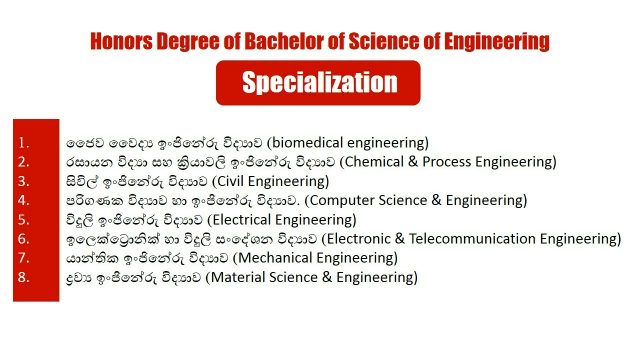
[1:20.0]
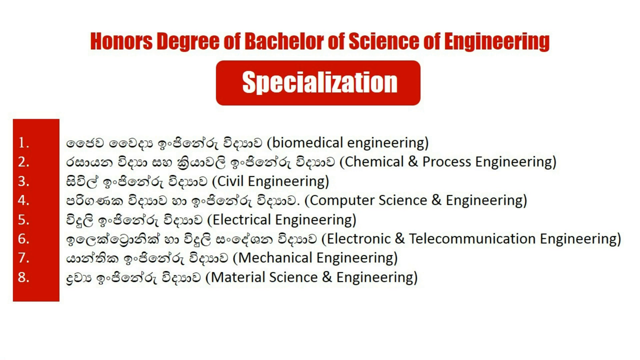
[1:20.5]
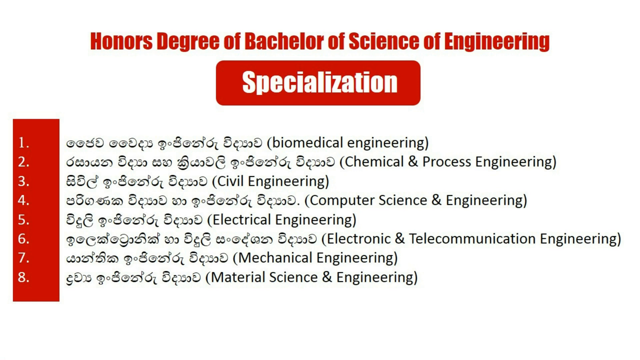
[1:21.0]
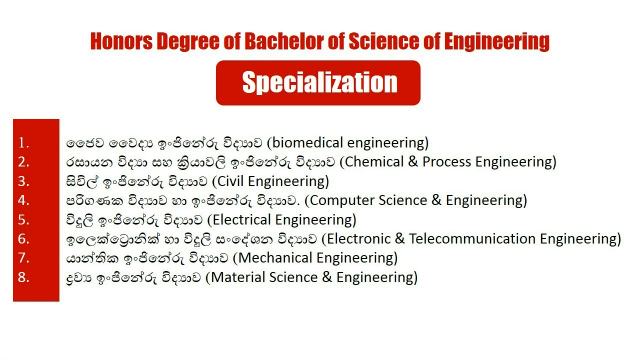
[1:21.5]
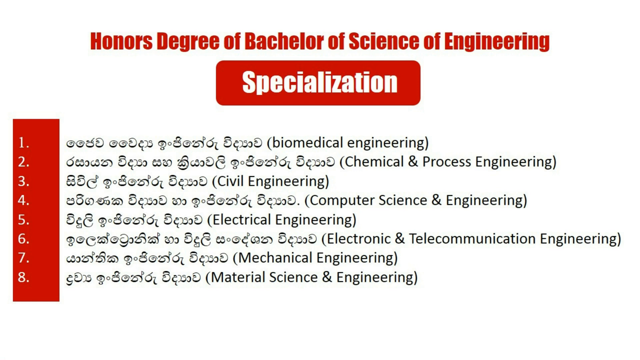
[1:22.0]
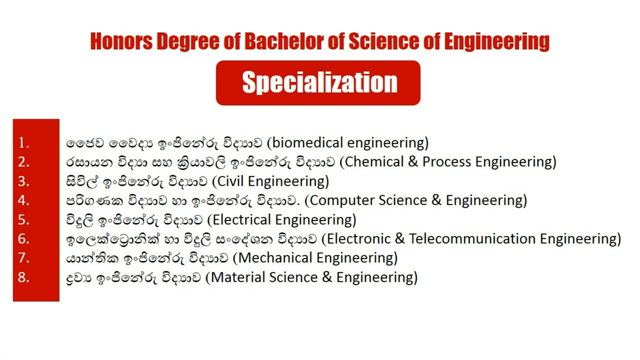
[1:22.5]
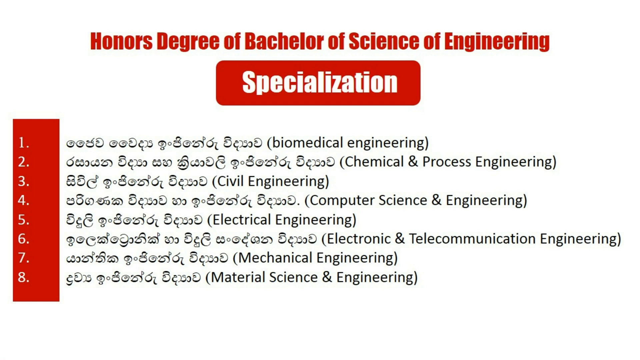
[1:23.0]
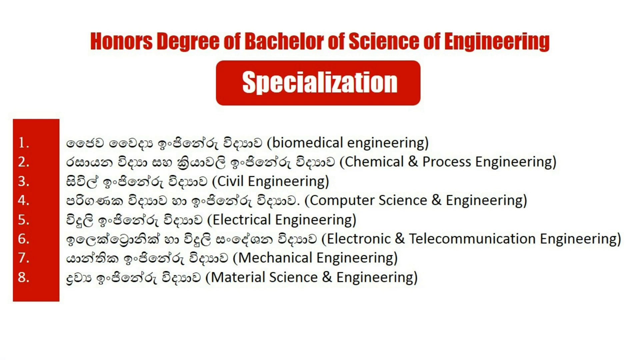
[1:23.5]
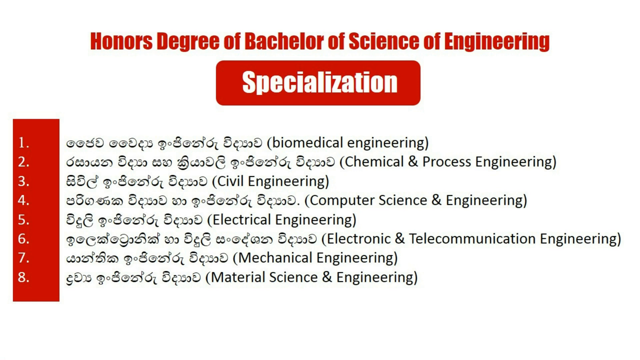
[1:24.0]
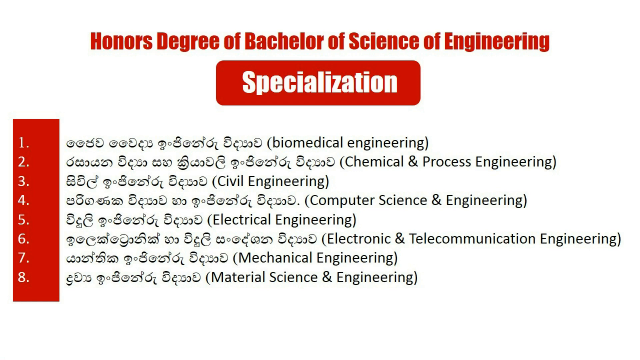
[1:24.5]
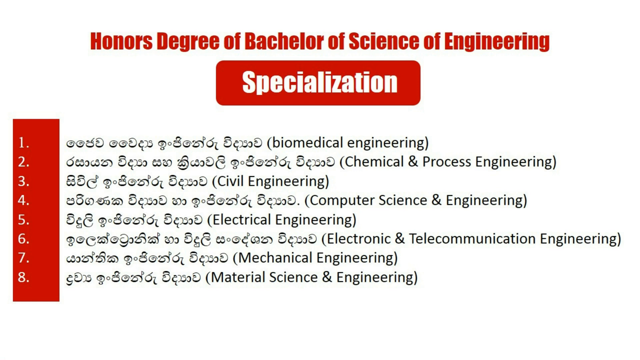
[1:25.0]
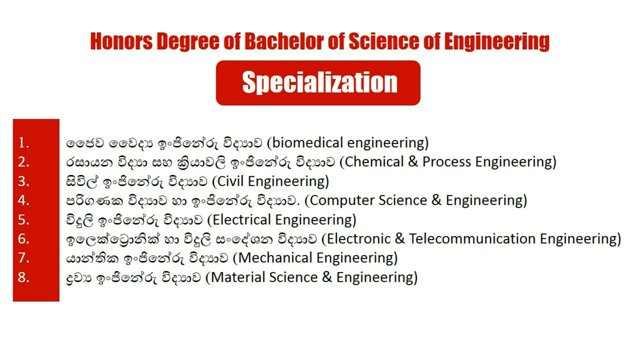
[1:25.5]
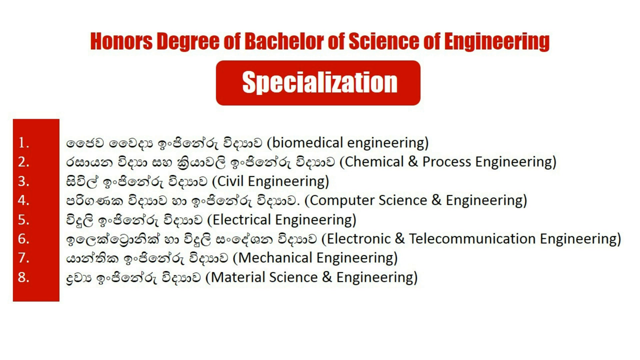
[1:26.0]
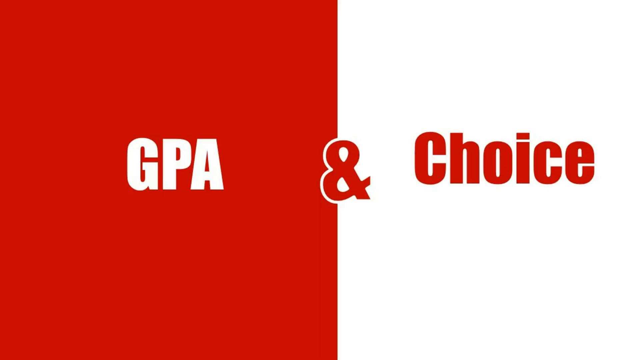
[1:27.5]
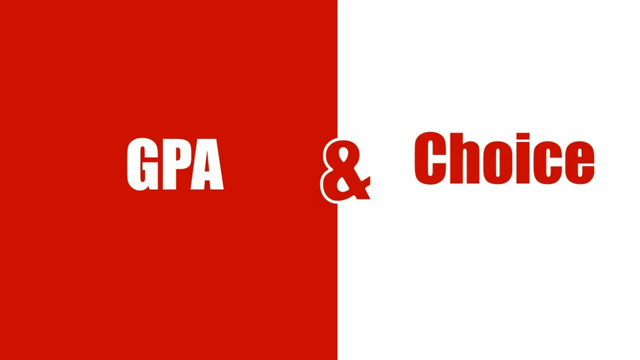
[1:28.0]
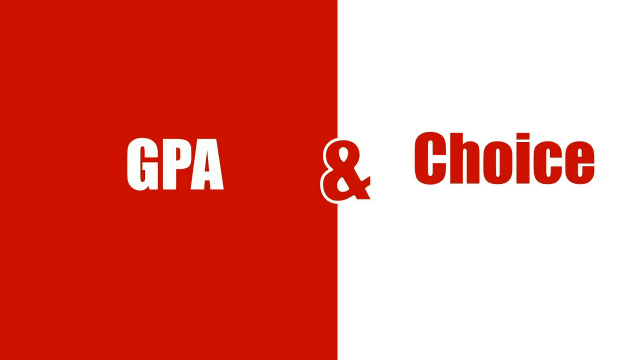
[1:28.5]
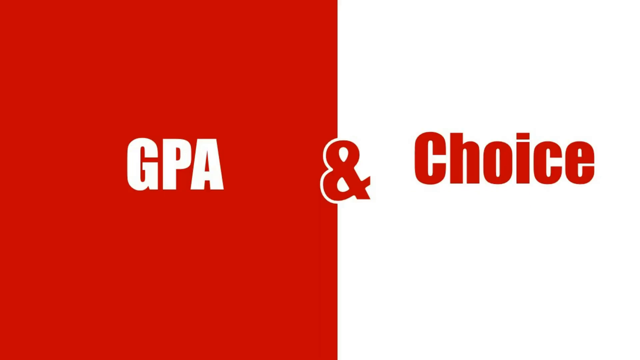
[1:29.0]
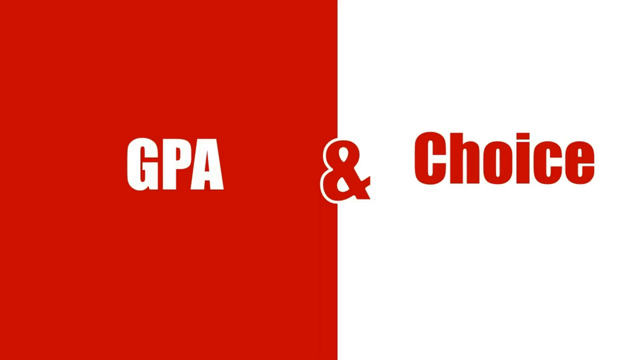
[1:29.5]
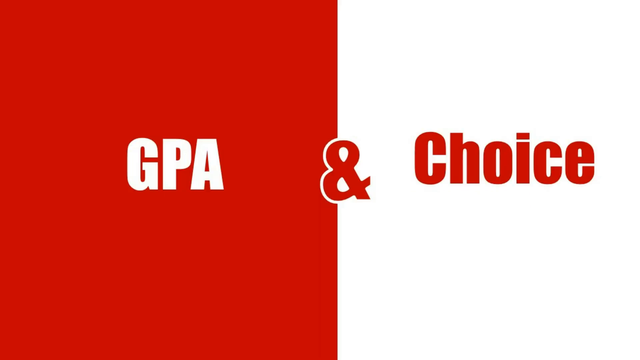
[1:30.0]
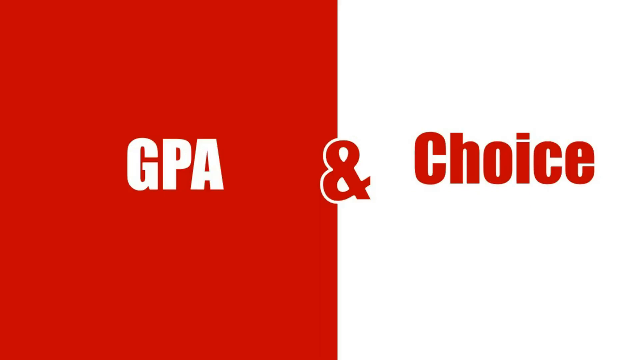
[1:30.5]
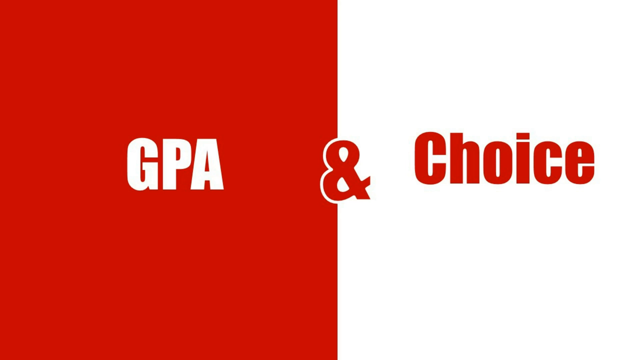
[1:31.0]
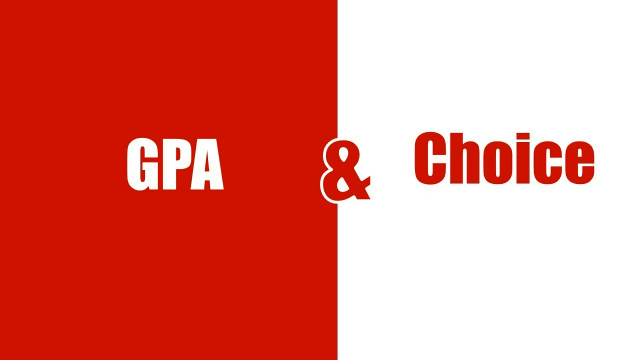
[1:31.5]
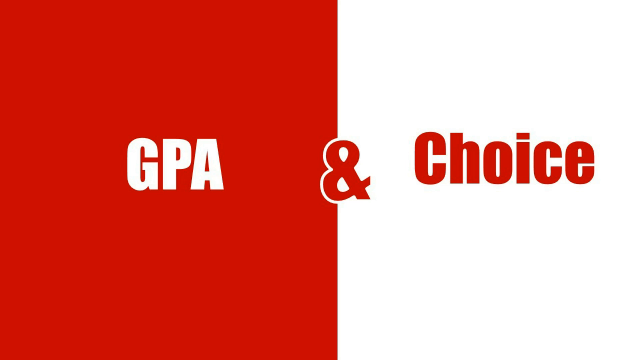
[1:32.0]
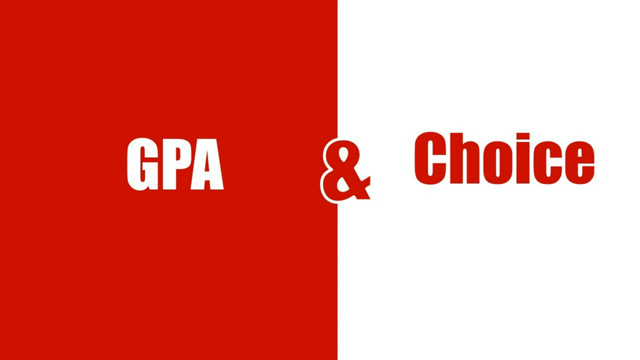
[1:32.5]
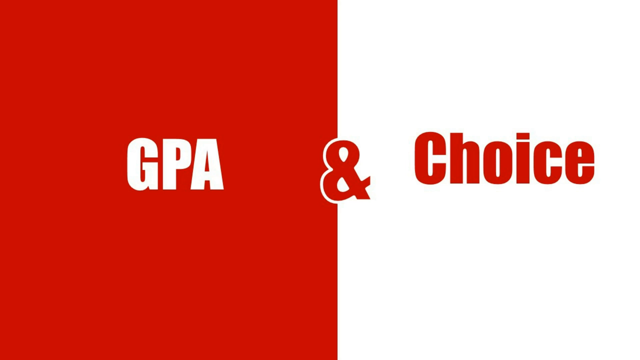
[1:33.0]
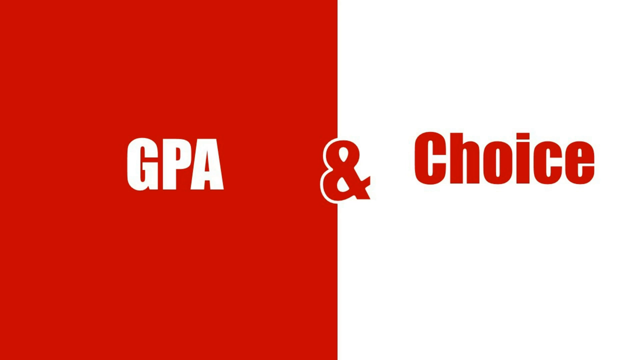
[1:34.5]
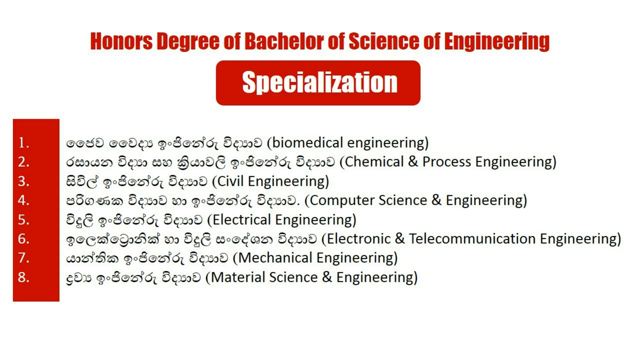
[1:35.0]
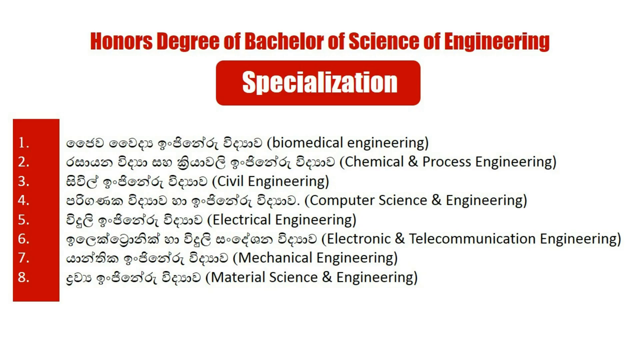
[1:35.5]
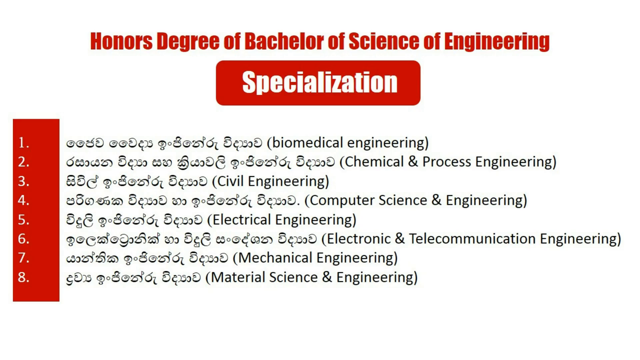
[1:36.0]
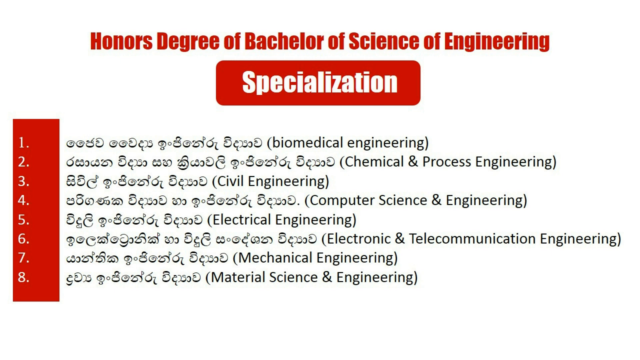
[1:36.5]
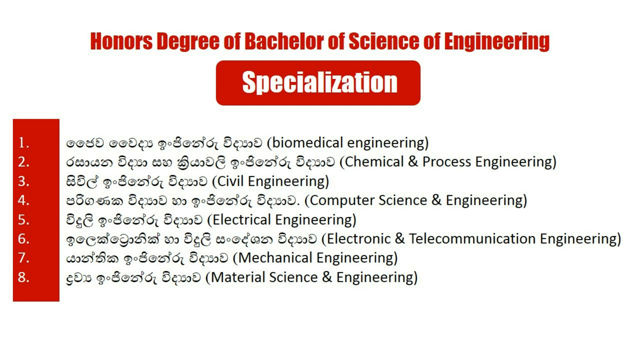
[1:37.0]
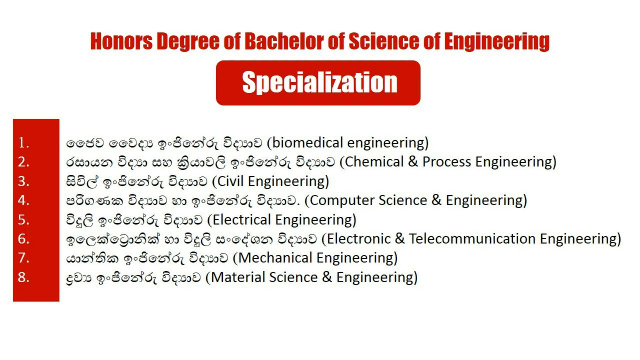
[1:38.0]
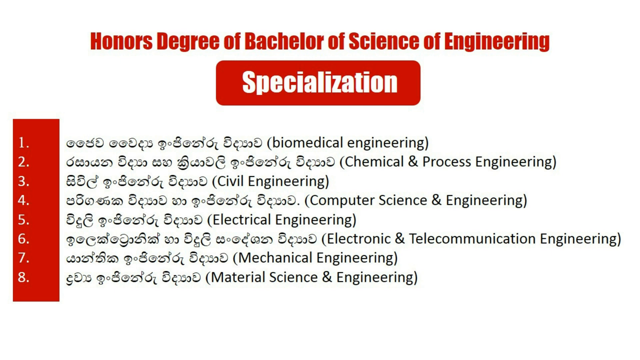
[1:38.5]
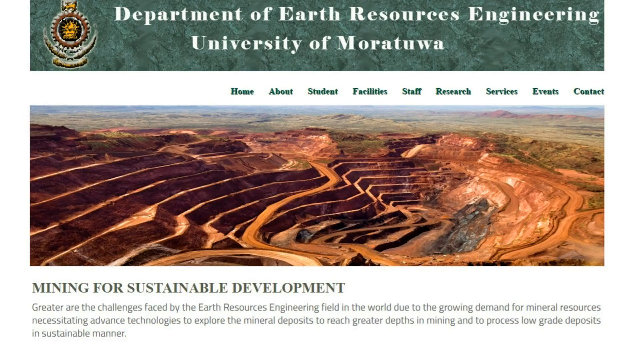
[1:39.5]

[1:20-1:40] What appears to be Hebrew writing is next to each of the different degrees. The next slide has a white background and reads "honors degree a Bachelor of Science of engineering," spaced a little down and centered in red. Underneath, in slightly bigger text of the same style, "specialization" is in white inside a red rectangular box with rounded-off corners. A red rectangular box to the left, spaced down a little, is numbered one through eight. Next to each number are about four words in Hebrew, with the English in parentheses: 1 is "biomedical engineering," 2 is "chemical process," 3 is "civil engineering," continuing down to 8, "material science and engineering." Next, "GPA" and "choice" appear with a symbol in the middle, a red box on the left and a white box on the right separated by a vertical line, in reverse print: white writing on the red background and red writing in the white box.